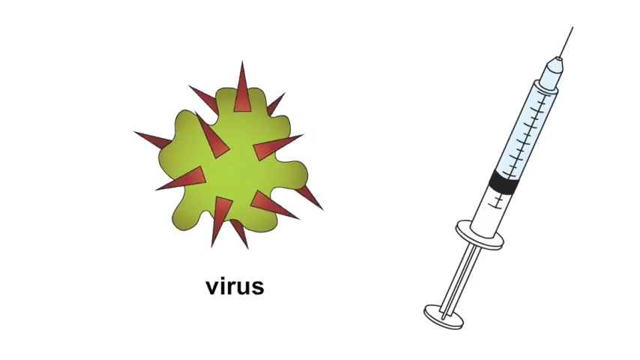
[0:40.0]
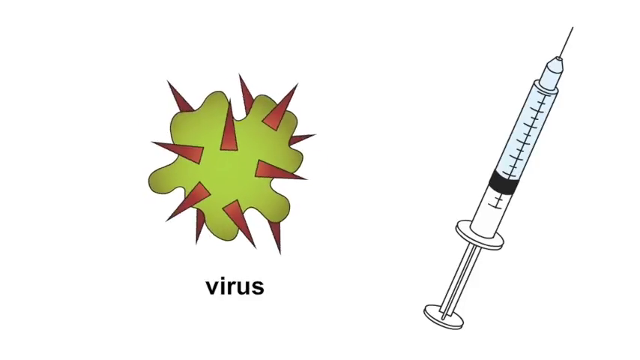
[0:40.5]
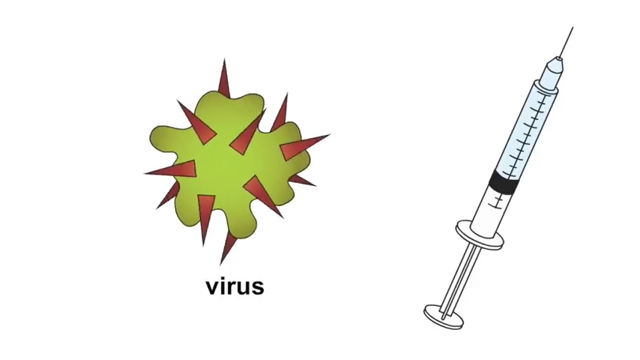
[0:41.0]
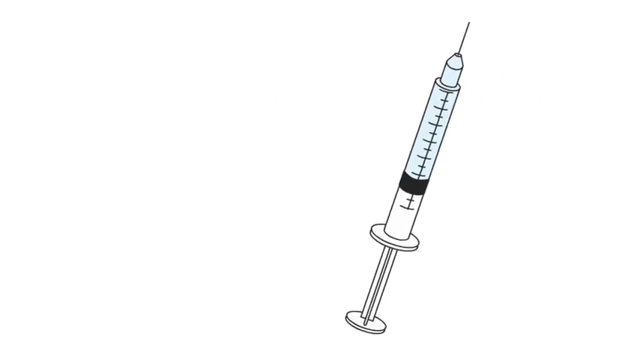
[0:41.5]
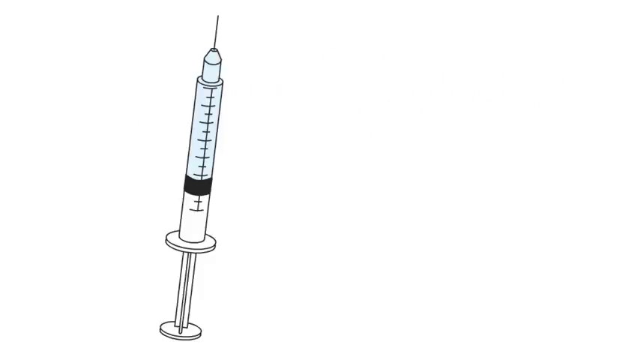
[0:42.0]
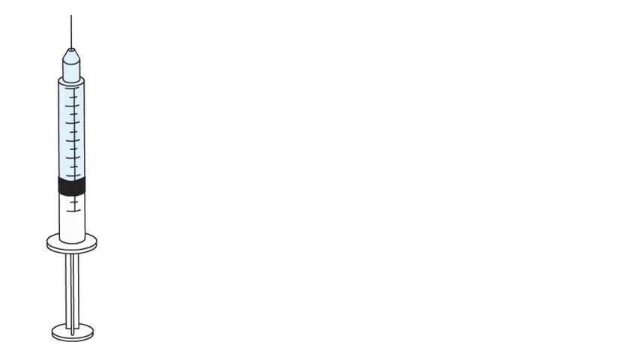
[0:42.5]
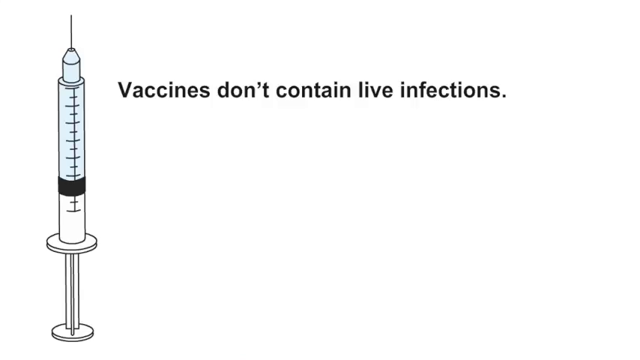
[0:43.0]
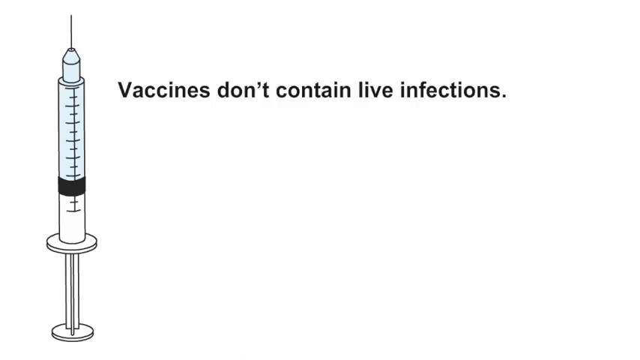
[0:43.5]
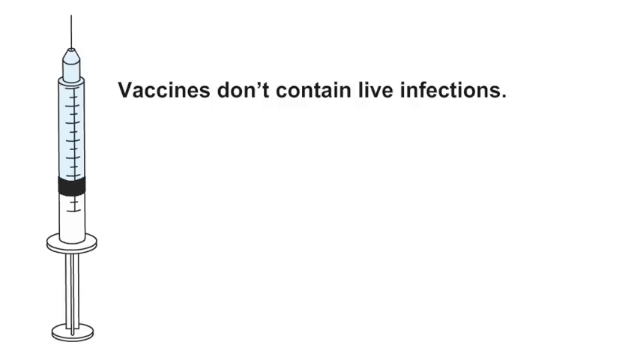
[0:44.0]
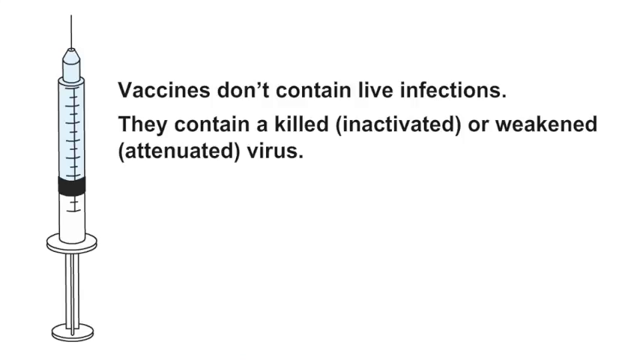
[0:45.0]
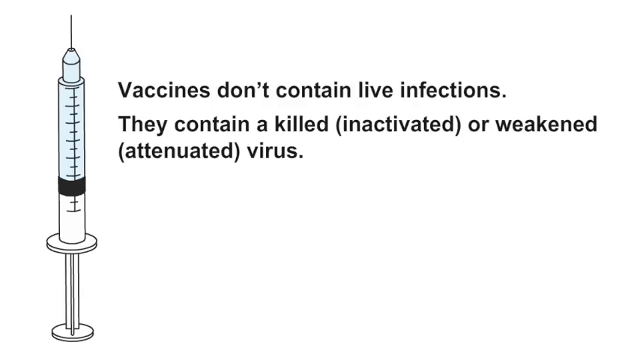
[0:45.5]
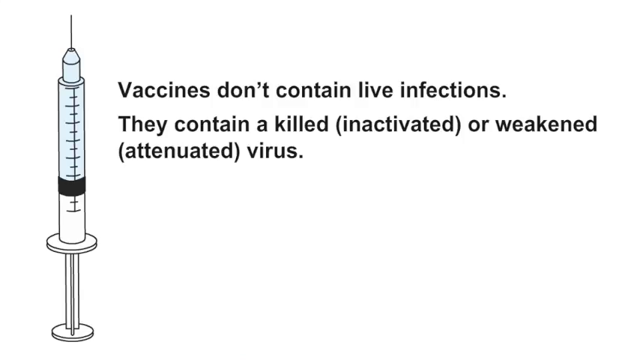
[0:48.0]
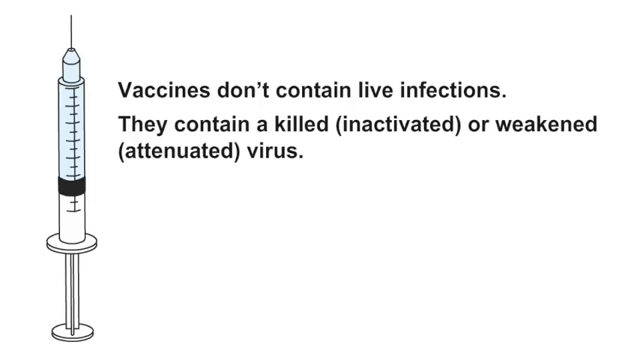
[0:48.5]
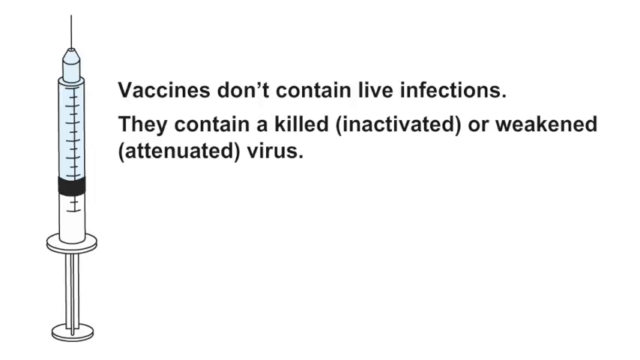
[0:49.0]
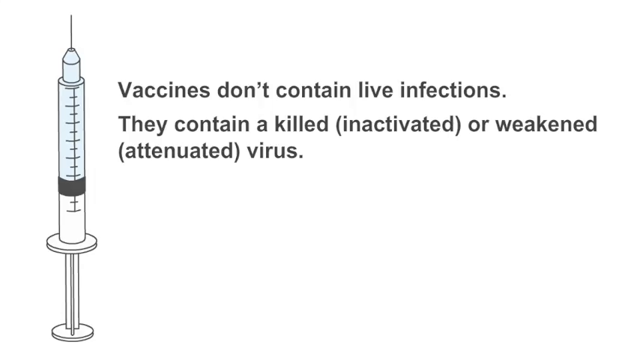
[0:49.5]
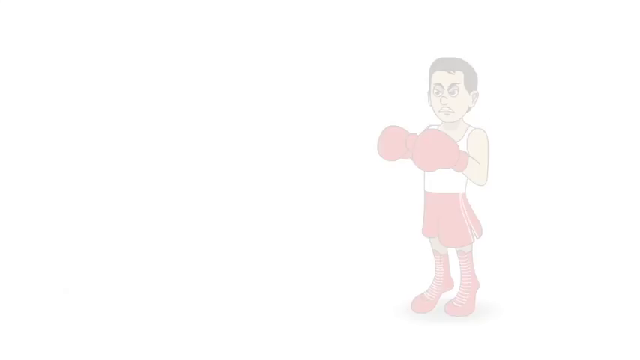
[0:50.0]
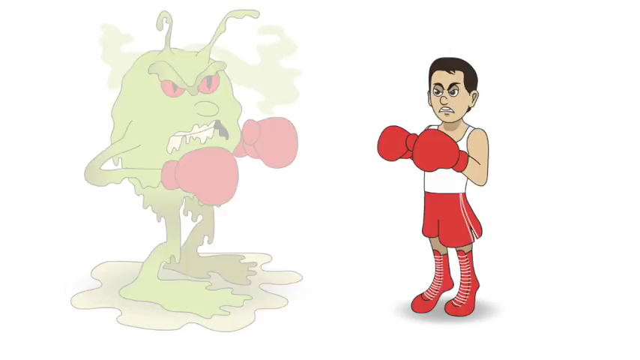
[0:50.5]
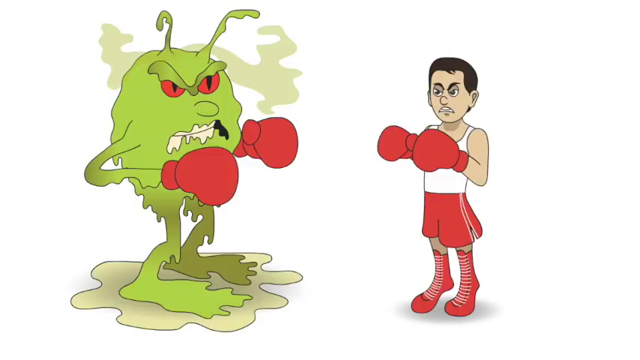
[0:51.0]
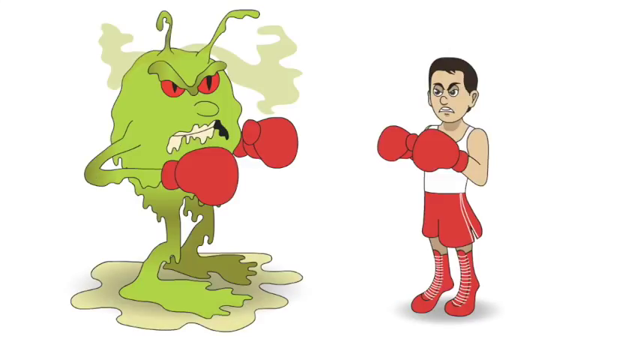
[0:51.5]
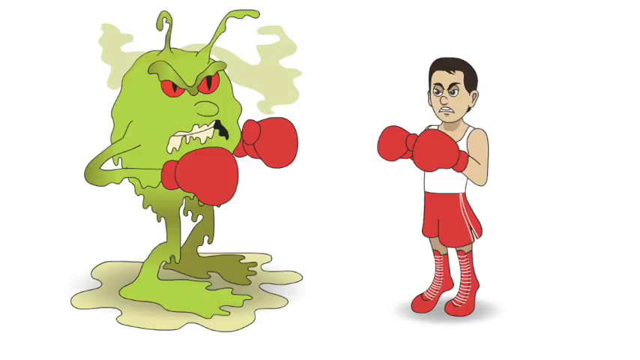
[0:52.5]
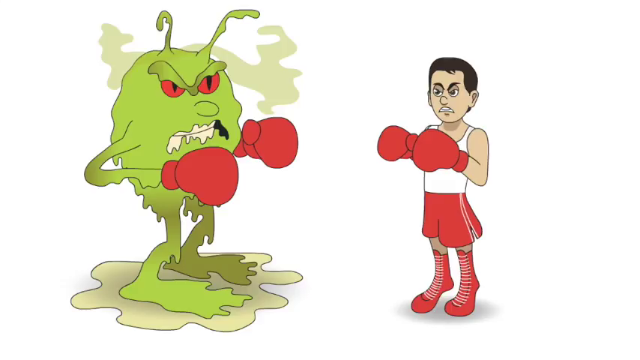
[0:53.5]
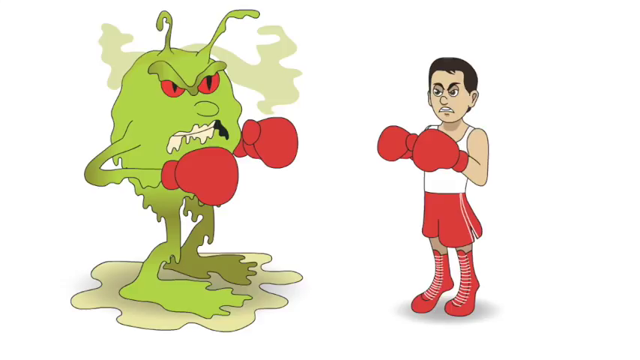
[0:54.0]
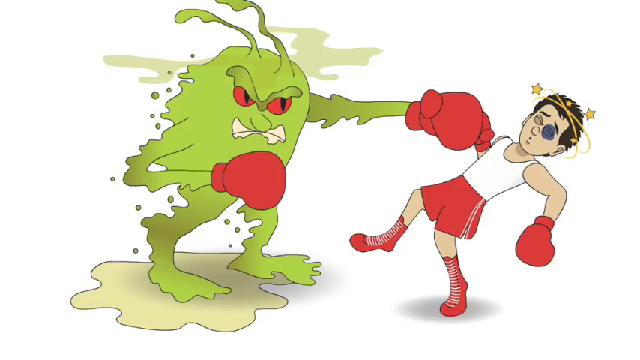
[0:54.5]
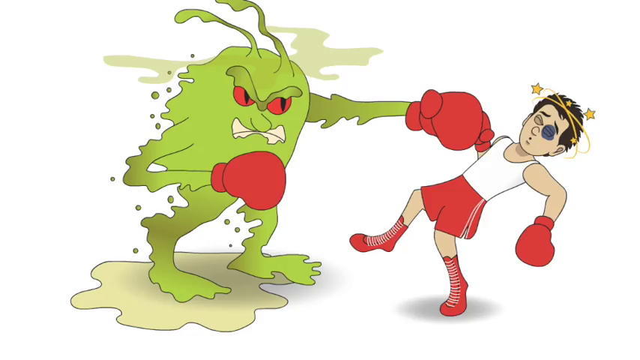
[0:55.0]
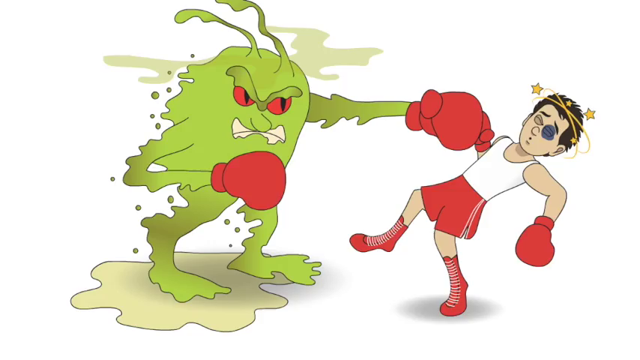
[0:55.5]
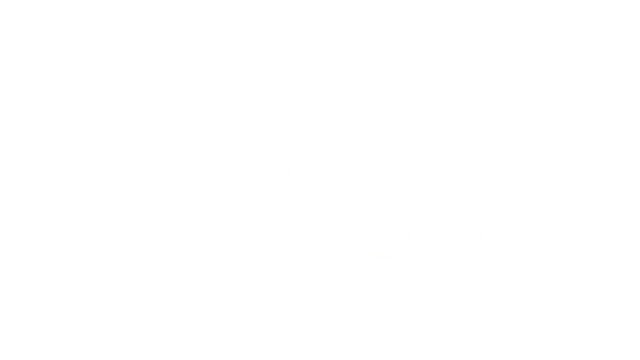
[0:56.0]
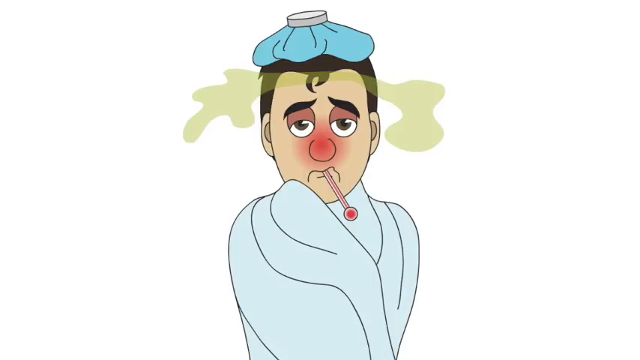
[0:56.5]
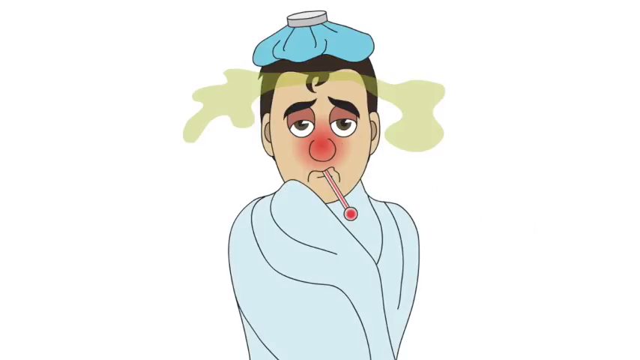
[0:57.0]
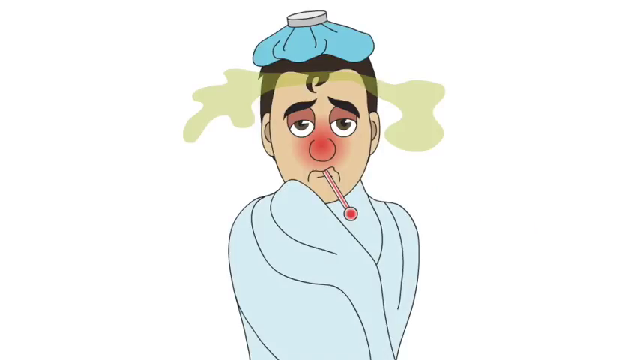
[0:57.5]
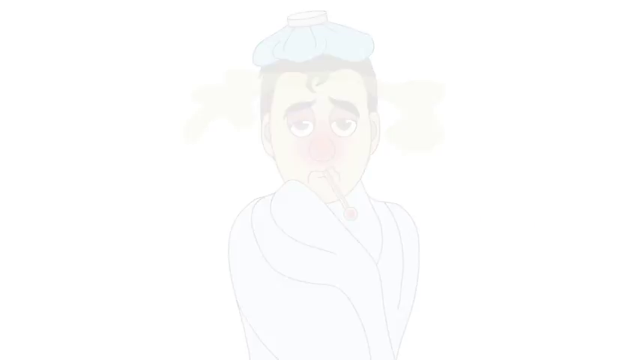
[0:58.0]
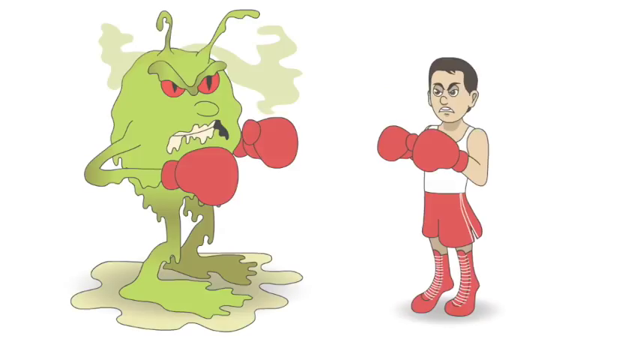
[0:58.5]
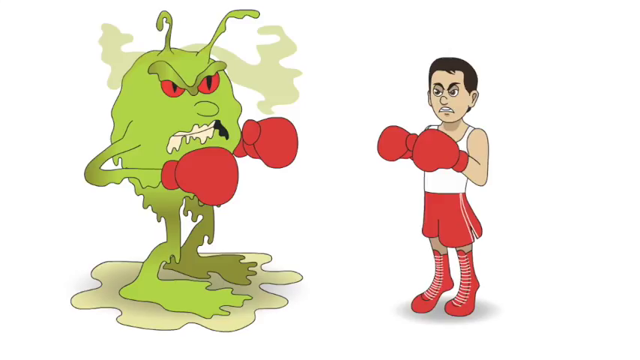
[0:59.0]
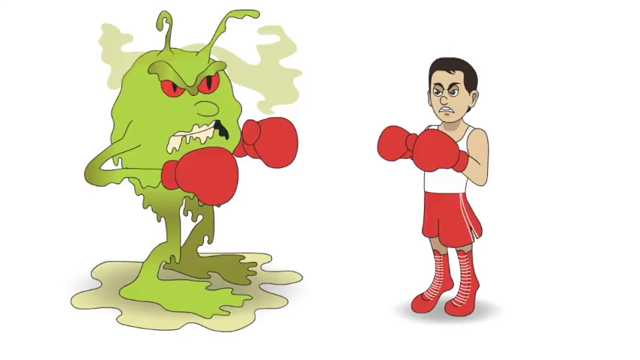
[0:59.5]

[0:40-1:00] The animation shows a green blob with multiple thin brown spikes coming out of it, labeled "virus" underneath, with a hypodermic needle next to it. The virus spins around and then disappears, and the hypodermic needle moves to the left side of the screen. Text appears next to the needle: "Vaccines don't contain live infections. They contain a killed (inactivated) or weakened (attenuated) virus." The screen then changes to an animated man in boxing gear on the right and, on the left, a large green slimy-looking creature also wearing boxing gloves. He punches the man, who is shown with stars around his head and a black eye. The man is then shown looking sick, with an ice pack on his head, a thermometer in his mouth, a red nose, and yellow vapor around his head.